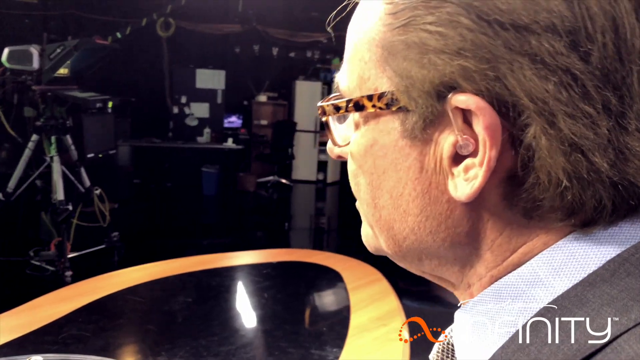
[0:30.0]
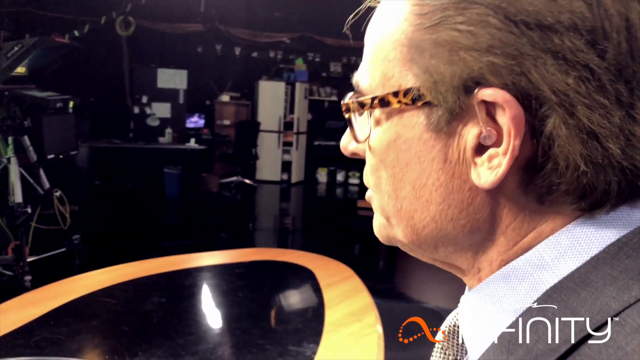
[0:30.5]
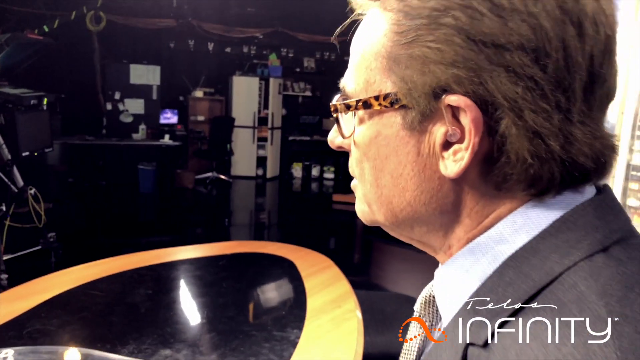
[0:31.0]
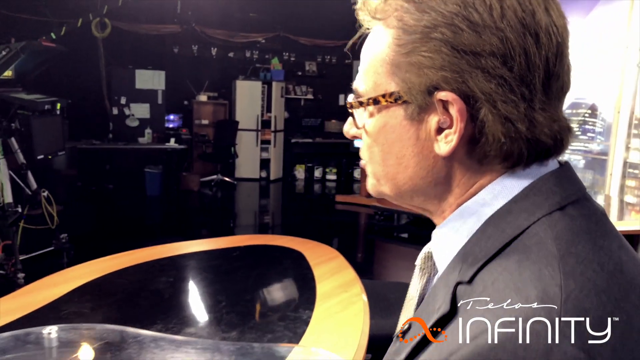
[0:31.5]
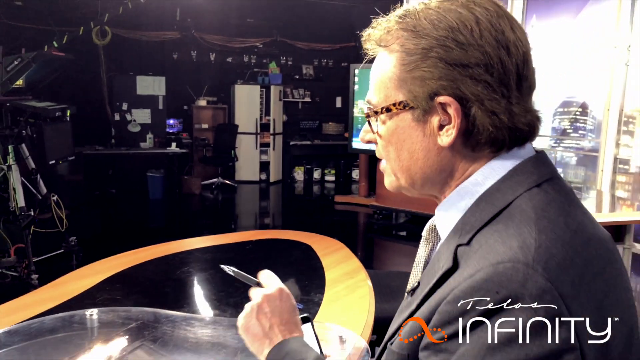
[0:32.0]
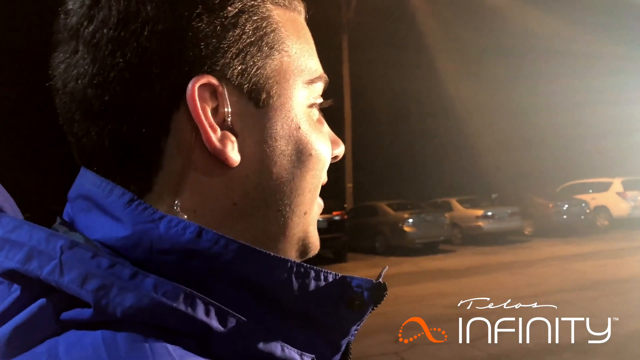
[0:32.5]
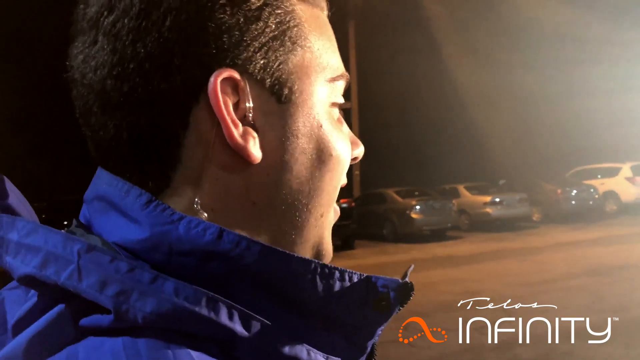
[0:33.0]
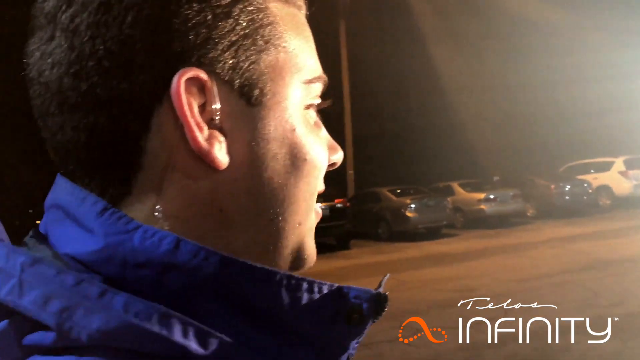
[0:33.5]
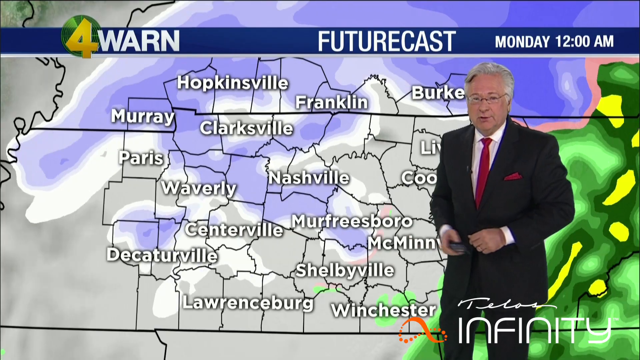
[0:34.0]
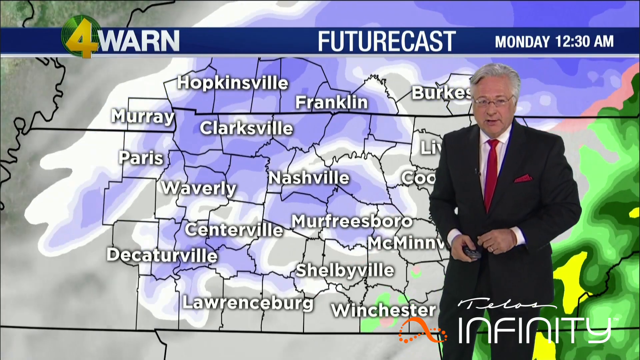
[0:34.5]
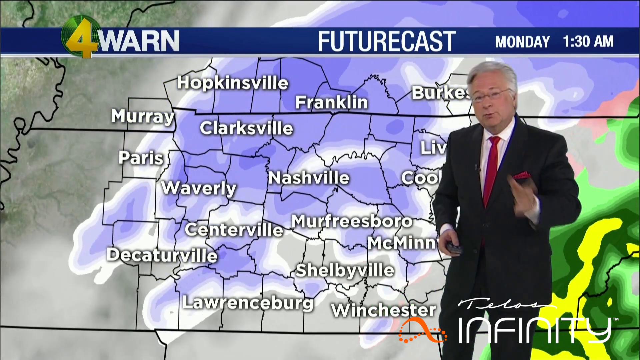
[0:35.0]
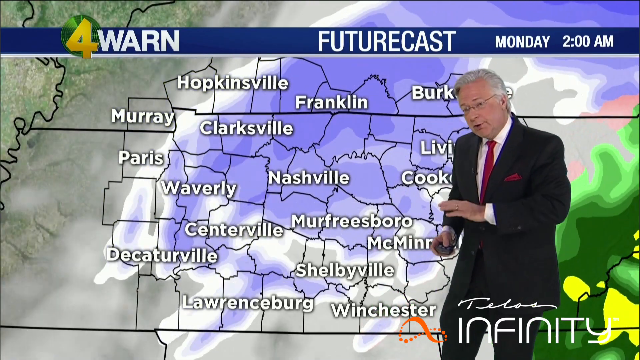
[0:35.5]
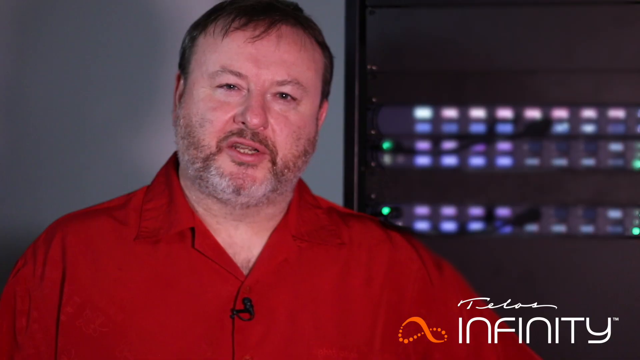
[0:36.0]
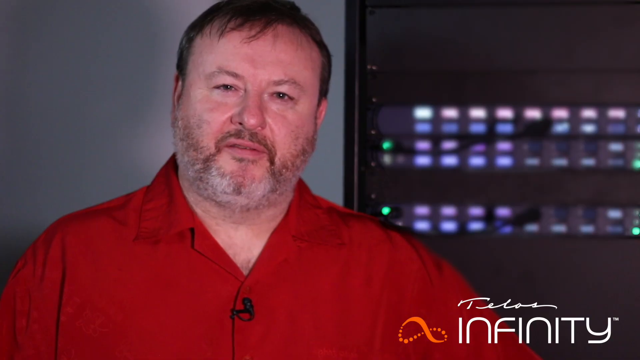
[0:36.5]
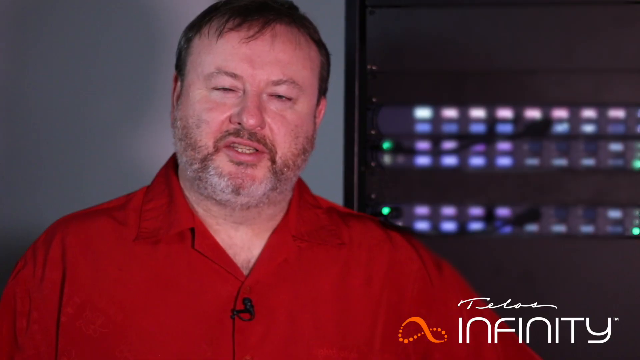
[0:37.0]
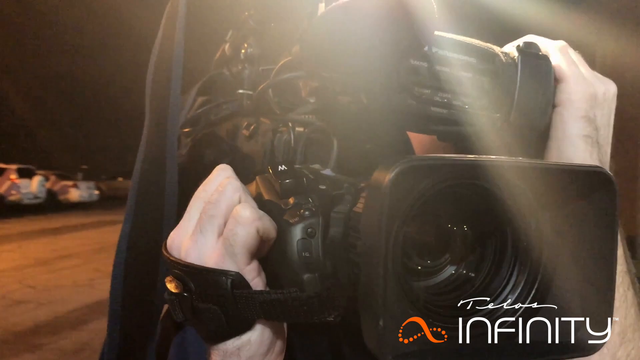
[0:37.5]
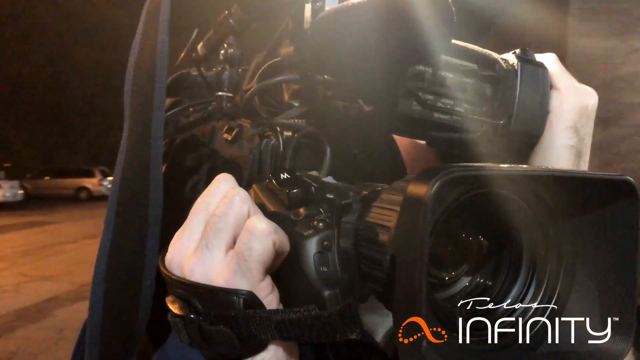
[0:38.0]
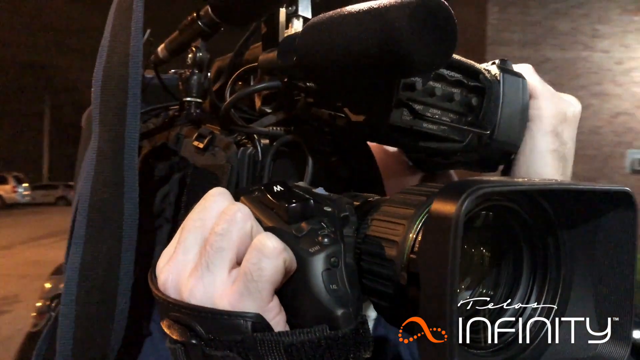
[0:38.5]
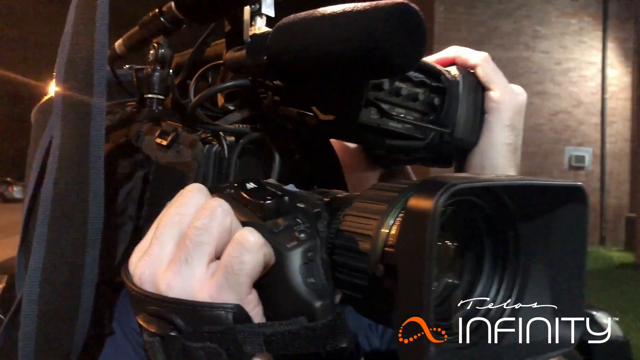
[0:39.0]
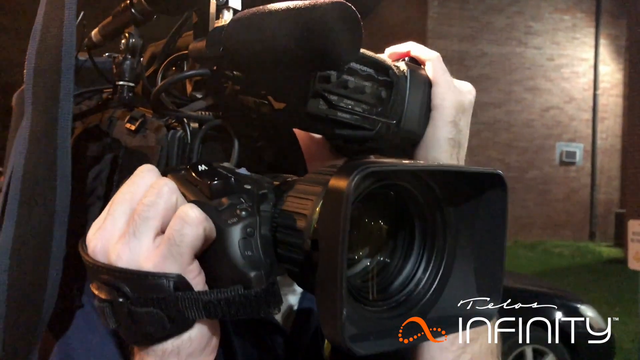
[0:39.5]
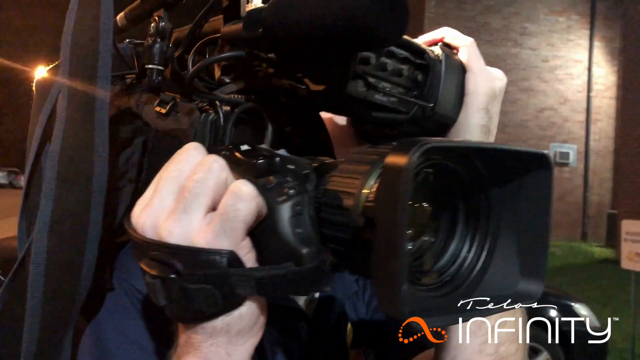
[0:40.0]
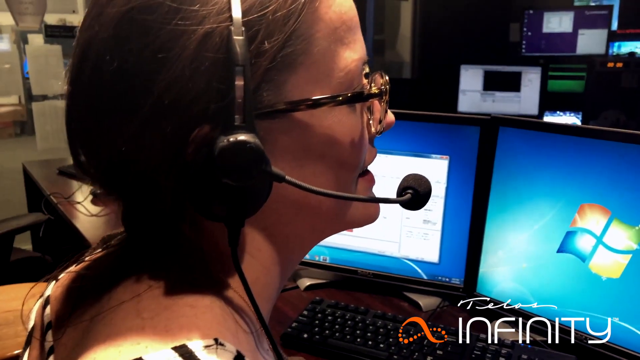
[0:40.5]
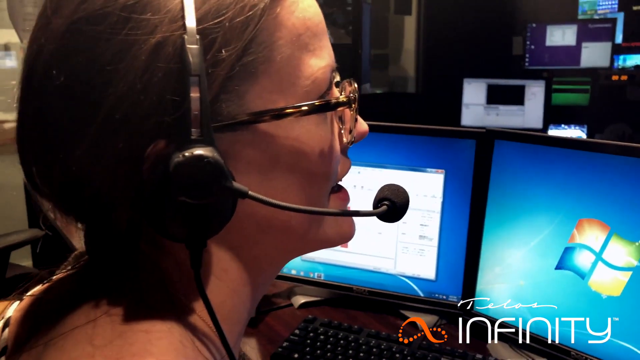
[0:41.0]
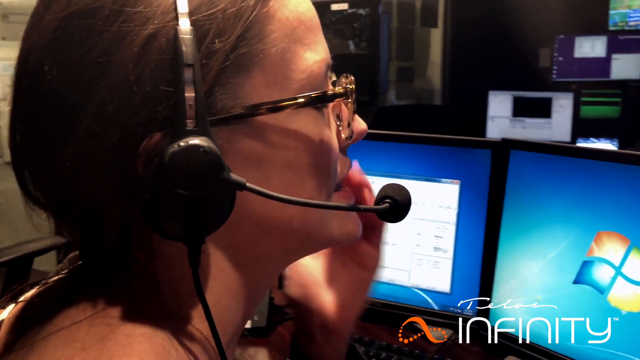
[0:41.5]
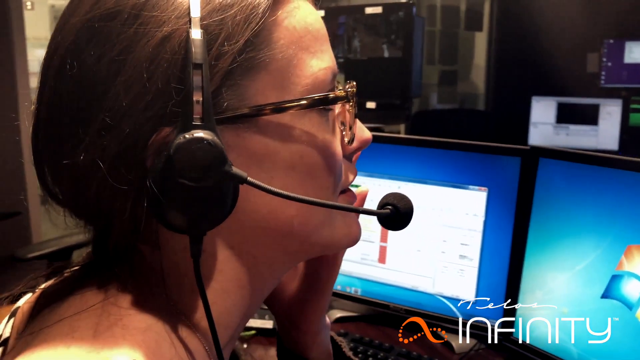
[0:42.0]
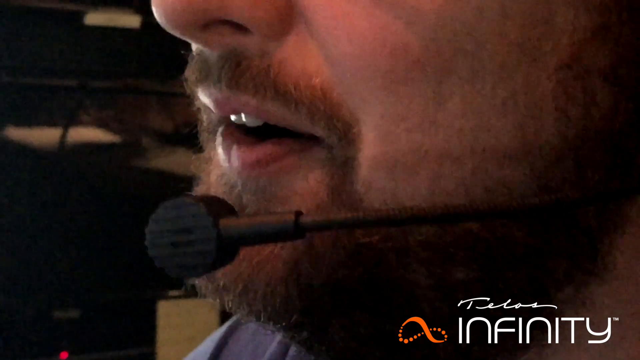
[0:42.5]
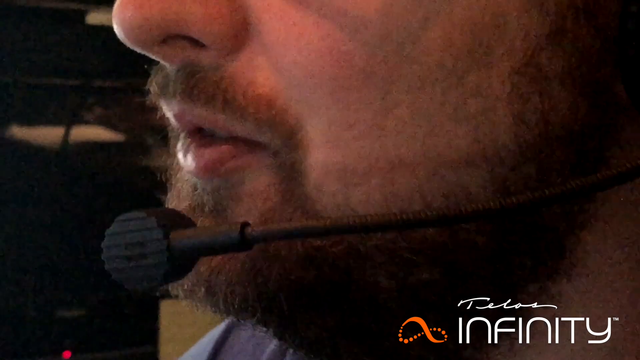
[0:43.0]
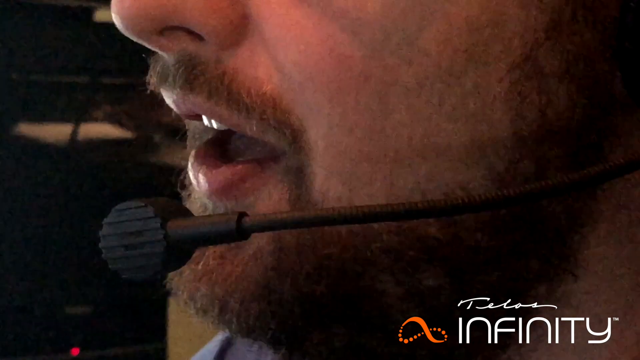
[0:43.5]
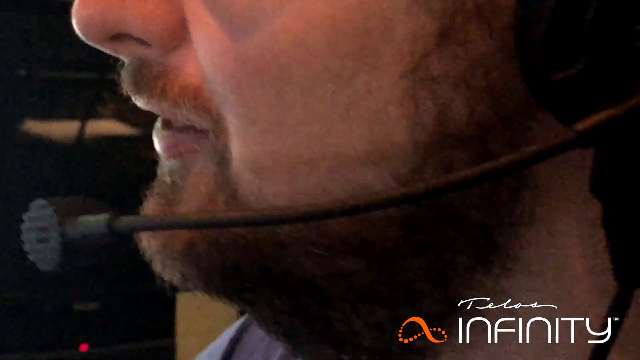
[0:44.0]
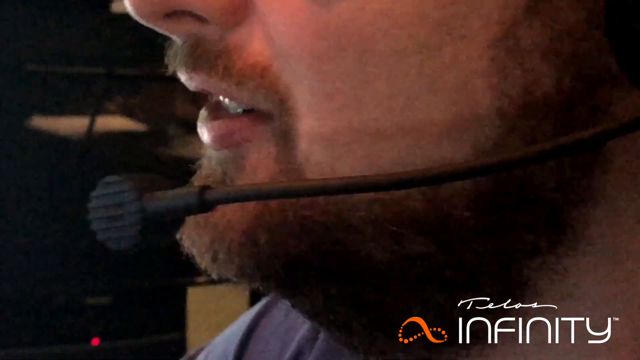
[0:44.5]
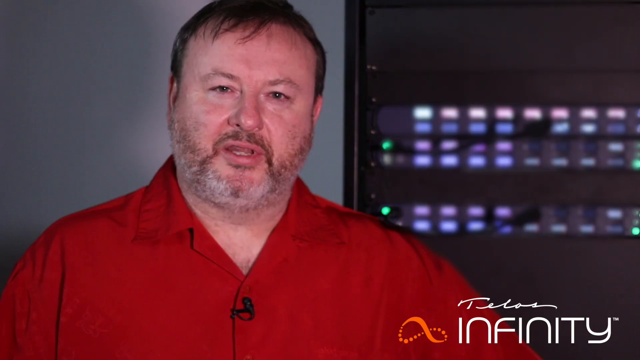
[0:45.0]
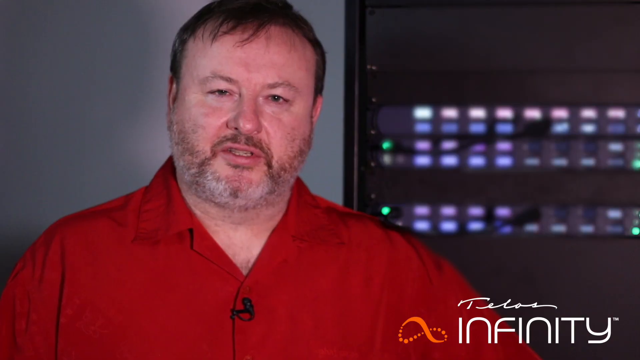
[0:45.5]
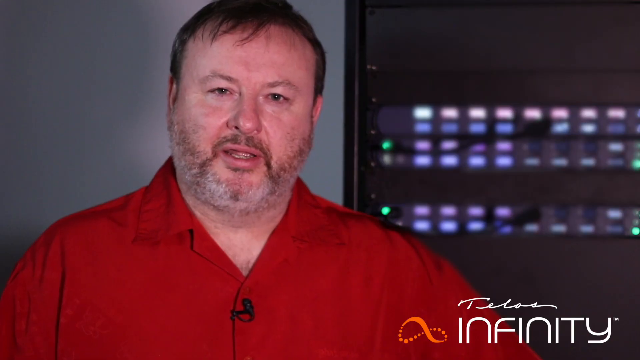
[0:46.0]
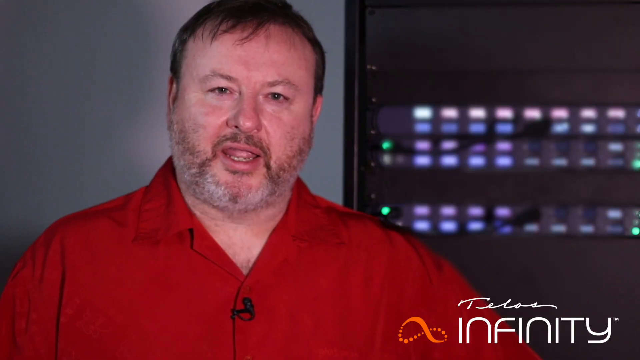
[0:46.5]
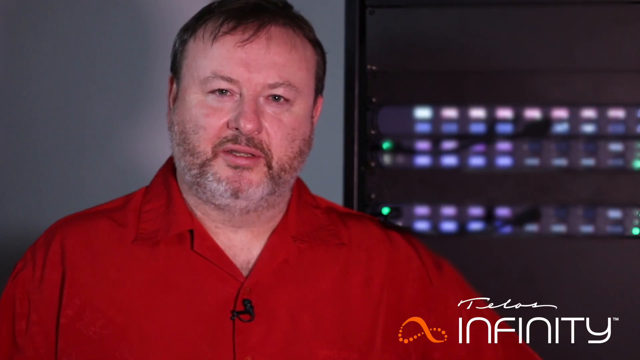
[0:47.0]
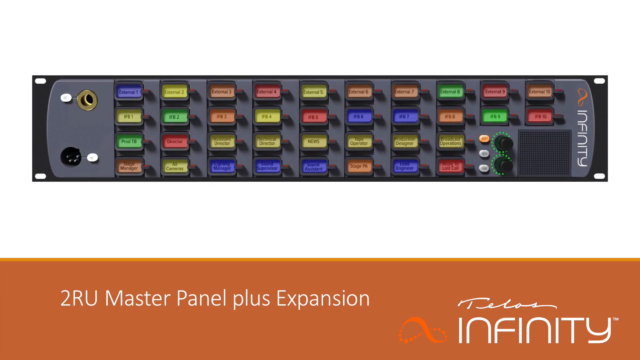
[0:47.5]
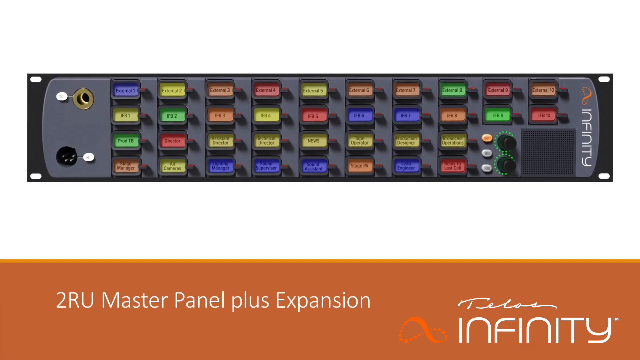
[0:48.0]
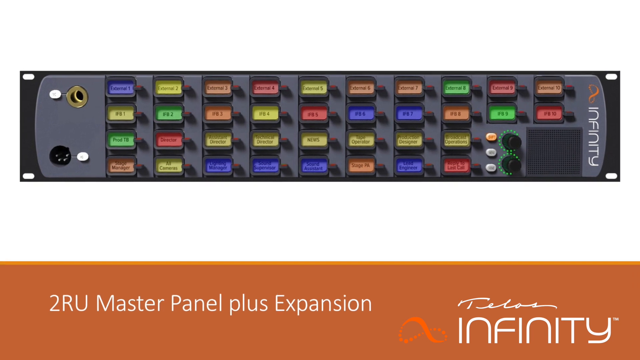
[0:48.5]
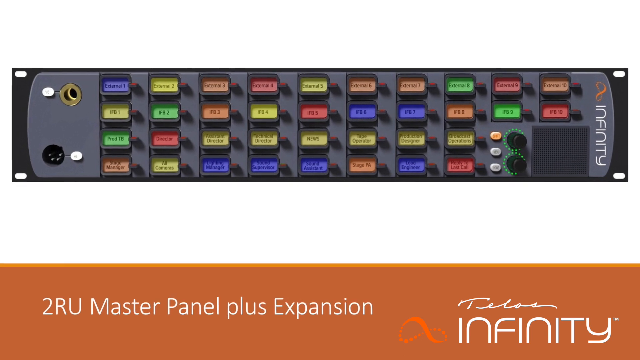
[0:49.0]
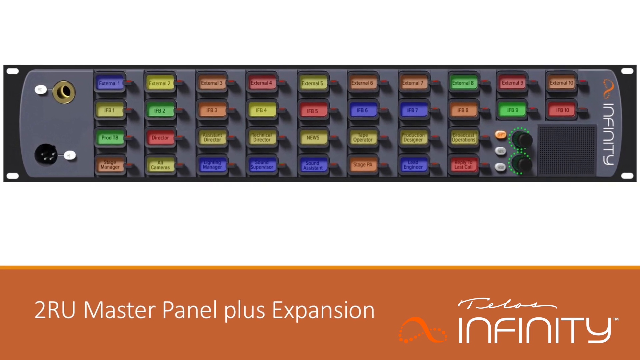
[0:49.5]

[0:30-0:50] A Caucasian man's head and neck appear on the right side of the screen; he has brown hair and wears leopard print glasses. On the left side is a tripod with a camera on top, and other equipment is in the back of the room. The man nods and talks, and the camera pans back to show him in a gray suit, button-down shirt and tie, sitting at an oval desk with gold trim on the edges. The scene changes to the right side of a smiling, dark-haired man's face, neck and shoulders, with parked cars on the right side of the screen; he is speaking. Next comes a weather report, with the weatherman in the bottom right corner. He has gray hair and glasses and wears a suit, a button-down shirt and a red tie. Text at the top of the screen shows "4", then "futurecast", then "Monday 1AM". A map on a screen behind him shows the names of various towns, with Franklin, Nashville, Murfreesboro and Shelbyville down the center. The screen briefly returns to the Caucasian man in the red shirt on the left, with a device with buttons on the right. Then Caucasian hands hold a large professional-type video camera. The woman seen earlier appears again, sitting in front of monitors and speaking into the microphone on the right side of her headset. Then a man's face is shown with only his nose, lips, chin and cheeks visible; he has a goatee and speaks into a microphone on the left side of his mouth. The video cuts back to the man in the red shirt, who speaks briefly, and then a panel of buttons appears at the top of the screen with text at the bottom that says "master panel plus expansion"; the name "Infinity" is on the far right of the top panel. A news reporter is seen once again, sitting in front of a yellow desk and speaking to the camera.